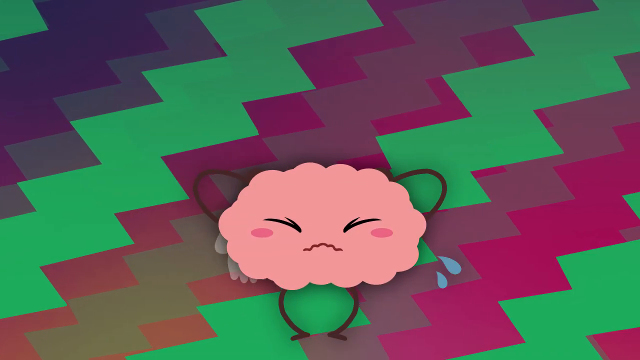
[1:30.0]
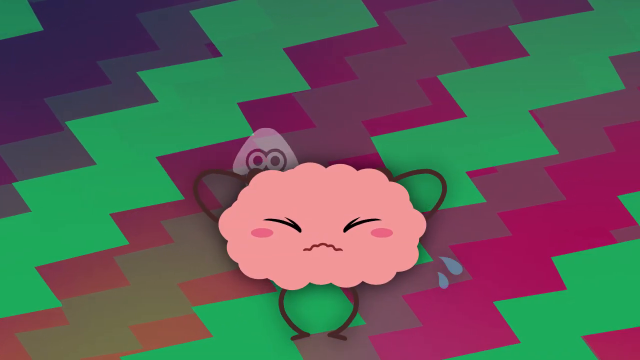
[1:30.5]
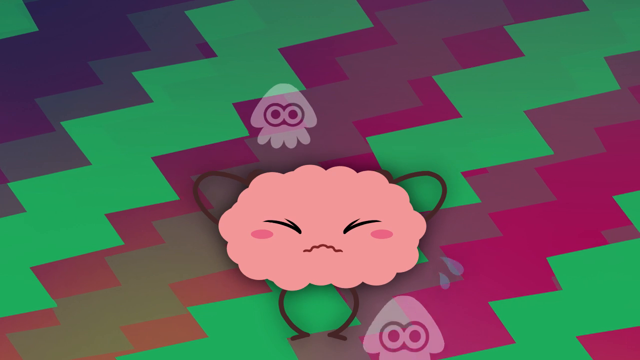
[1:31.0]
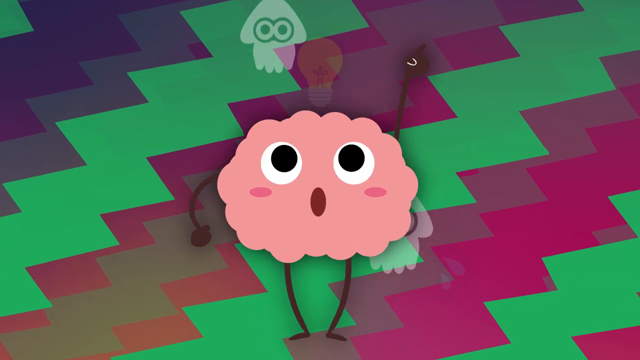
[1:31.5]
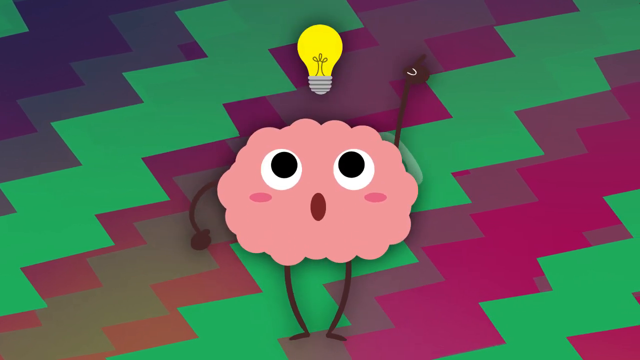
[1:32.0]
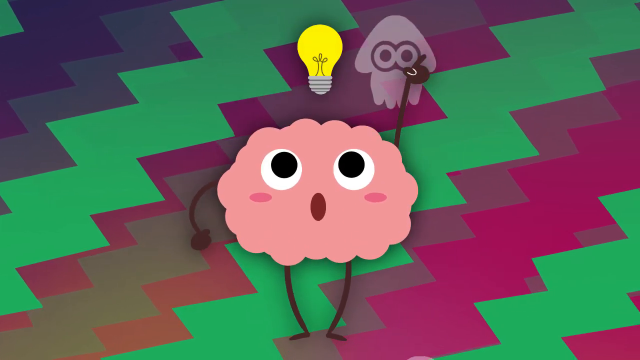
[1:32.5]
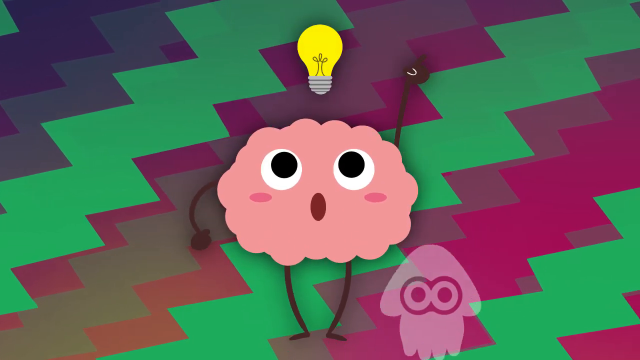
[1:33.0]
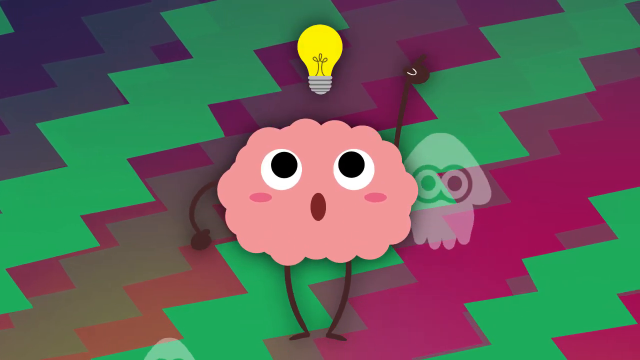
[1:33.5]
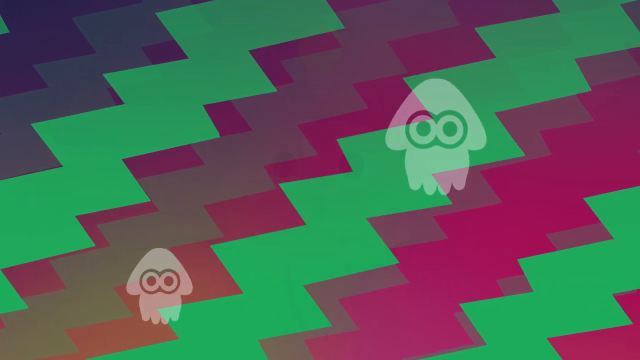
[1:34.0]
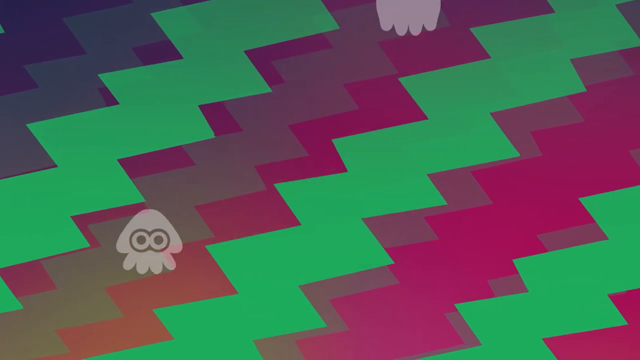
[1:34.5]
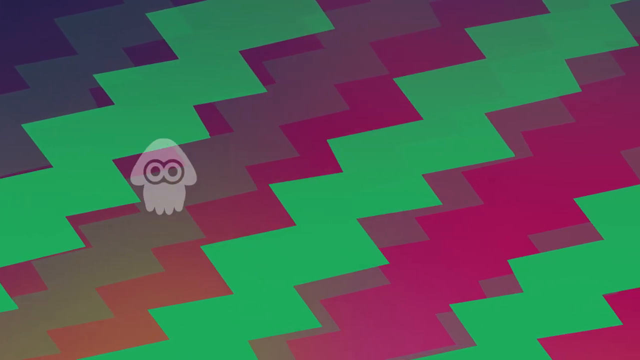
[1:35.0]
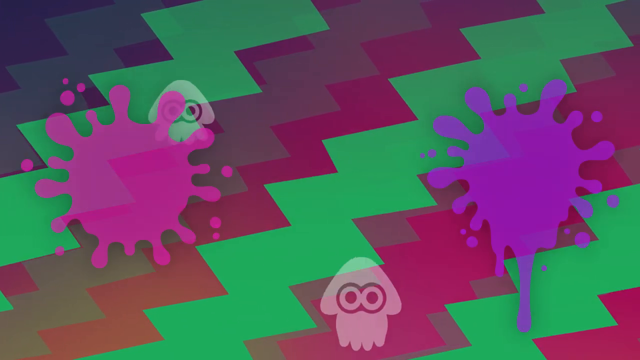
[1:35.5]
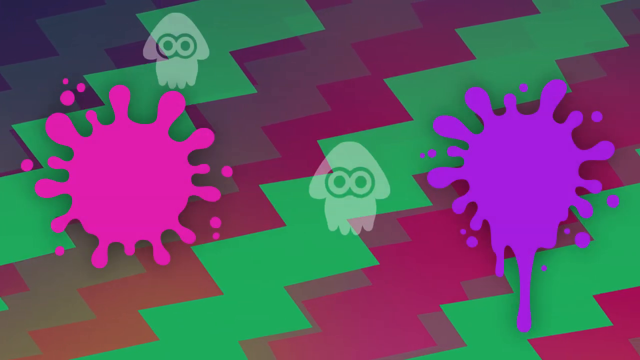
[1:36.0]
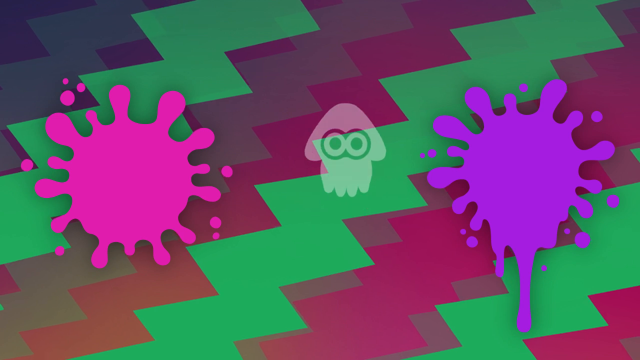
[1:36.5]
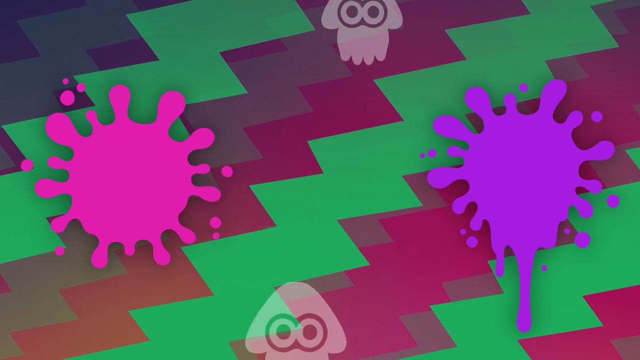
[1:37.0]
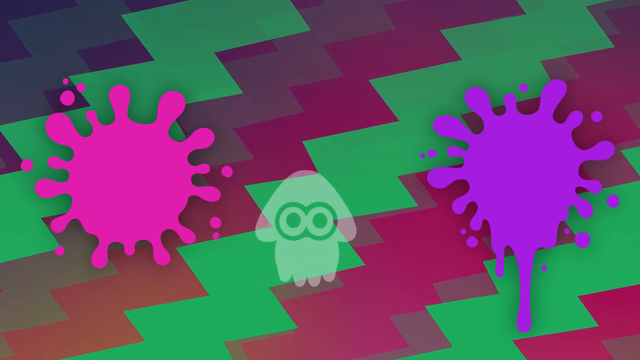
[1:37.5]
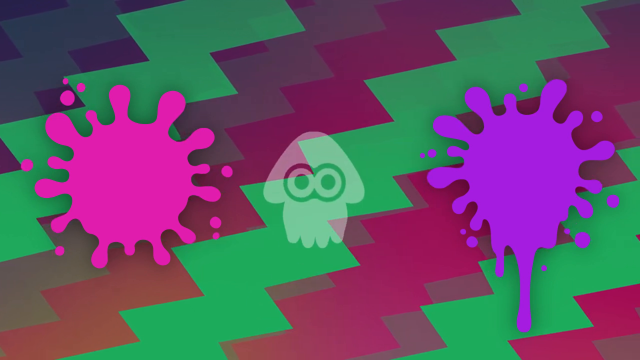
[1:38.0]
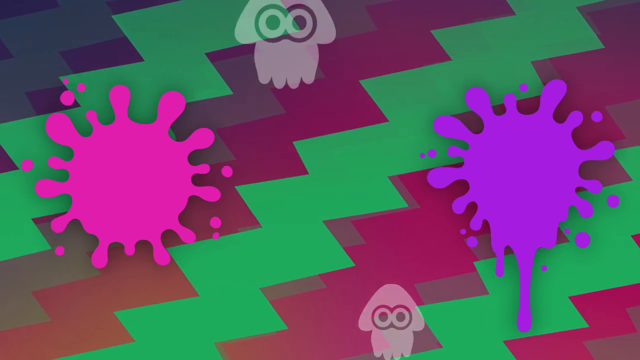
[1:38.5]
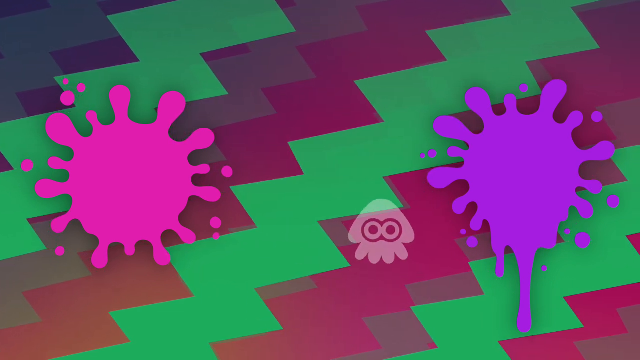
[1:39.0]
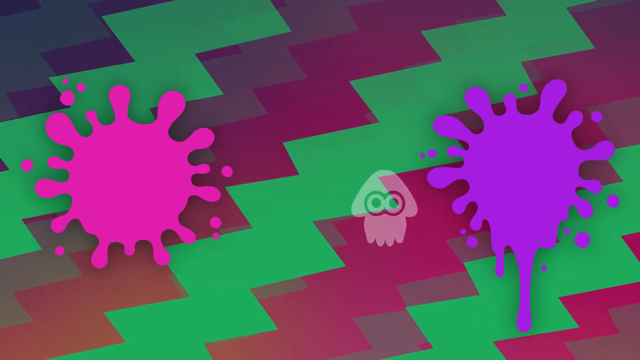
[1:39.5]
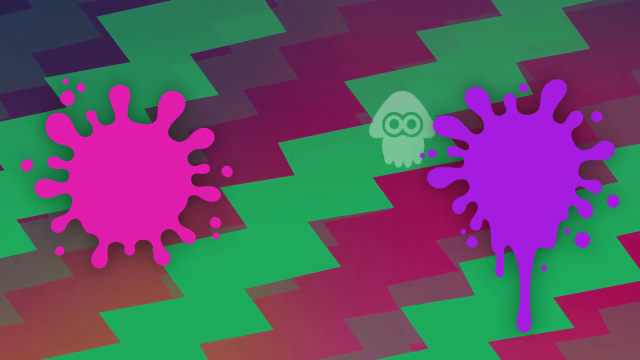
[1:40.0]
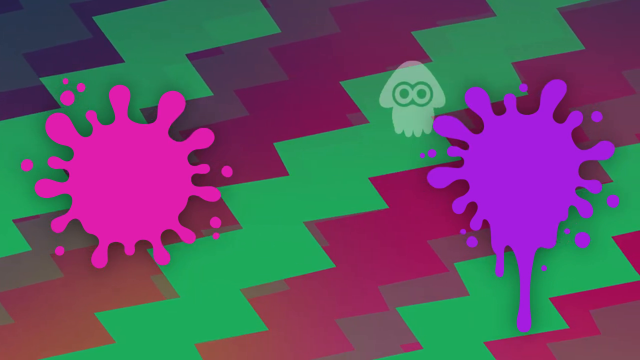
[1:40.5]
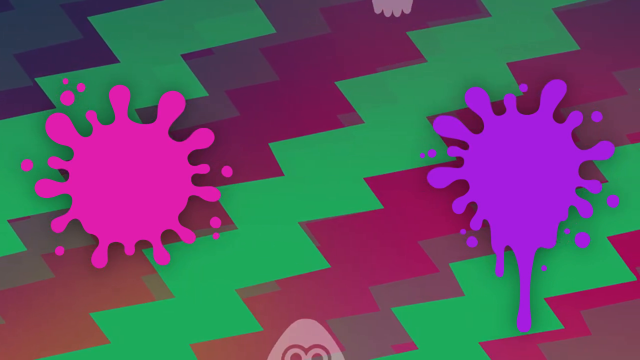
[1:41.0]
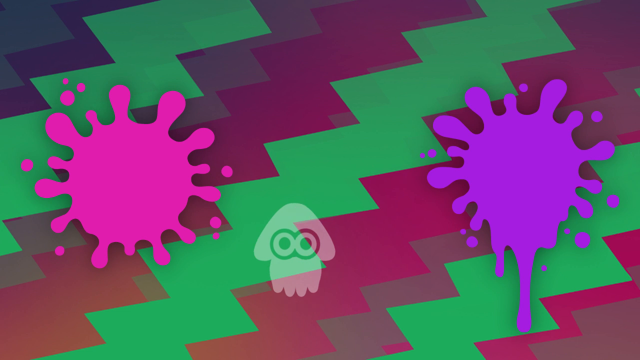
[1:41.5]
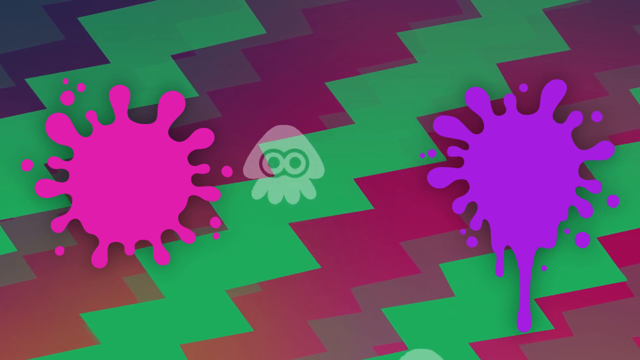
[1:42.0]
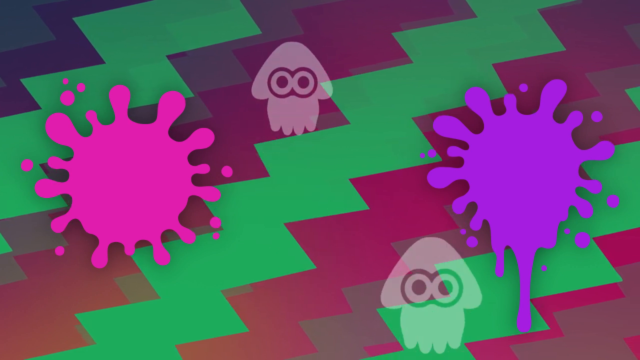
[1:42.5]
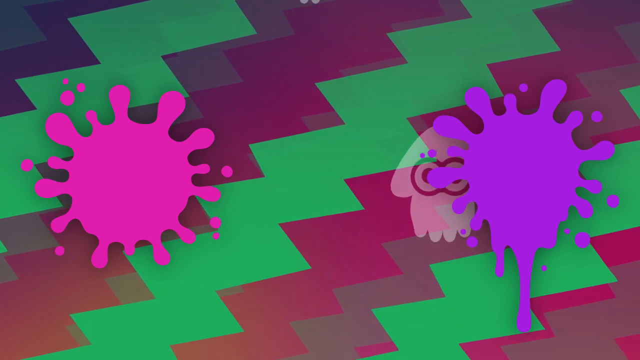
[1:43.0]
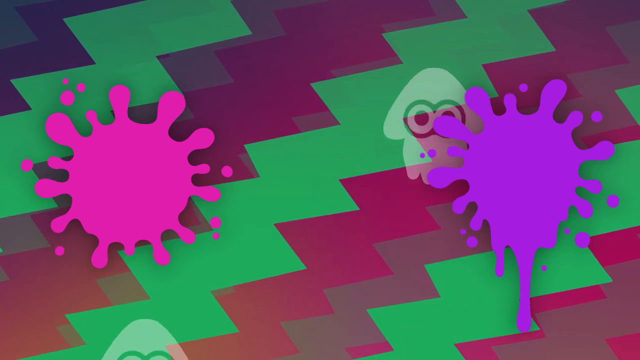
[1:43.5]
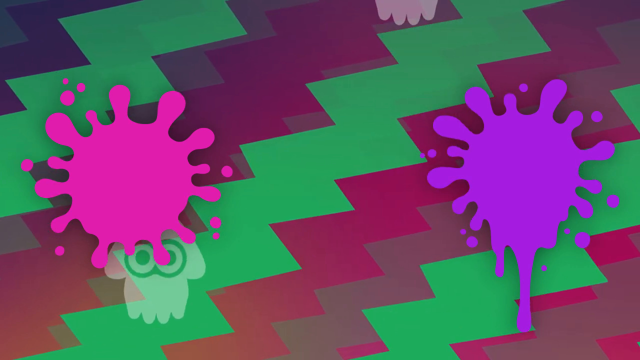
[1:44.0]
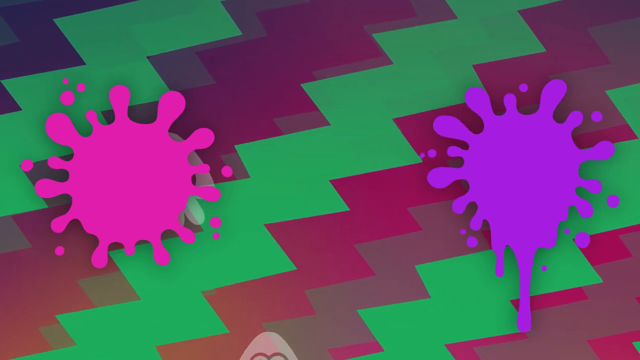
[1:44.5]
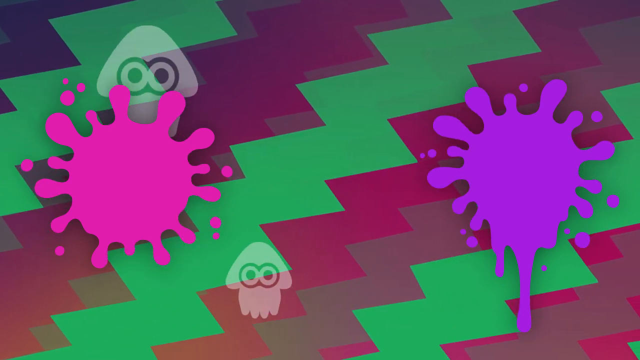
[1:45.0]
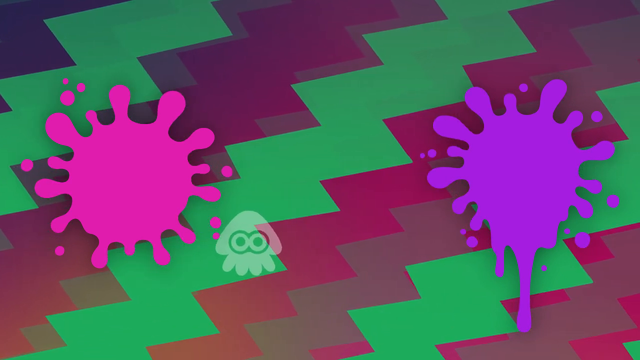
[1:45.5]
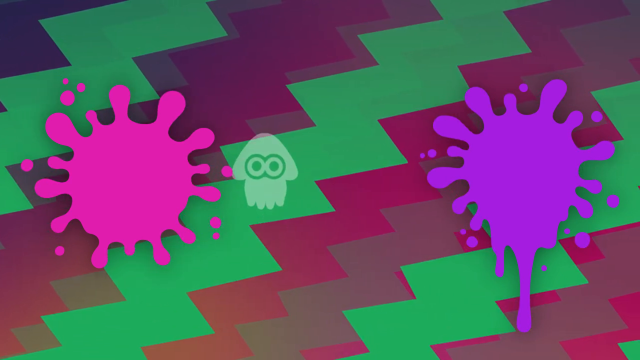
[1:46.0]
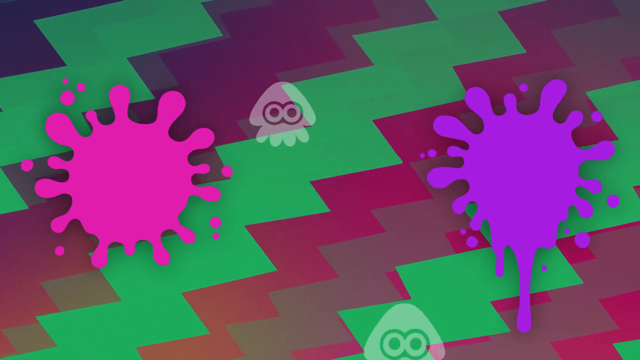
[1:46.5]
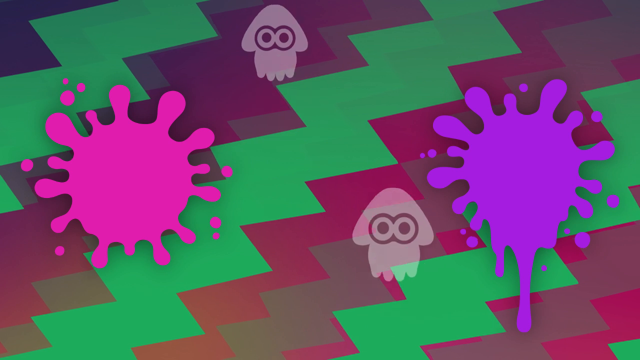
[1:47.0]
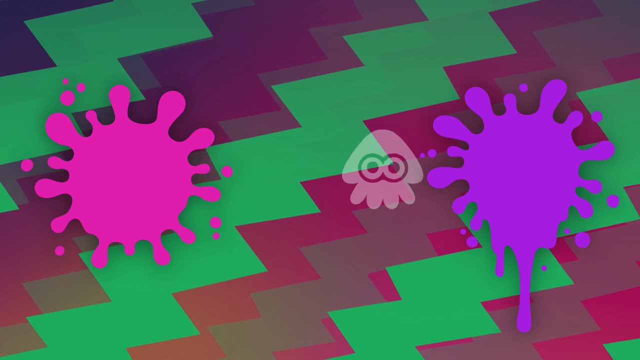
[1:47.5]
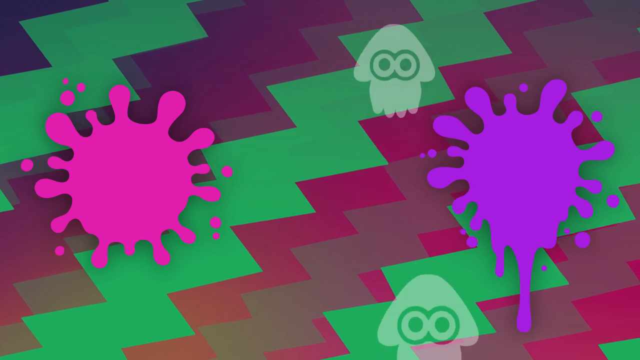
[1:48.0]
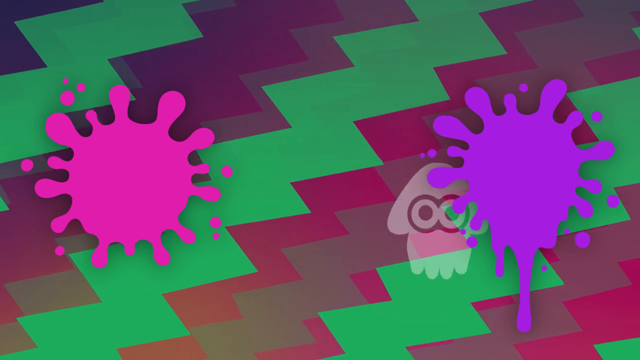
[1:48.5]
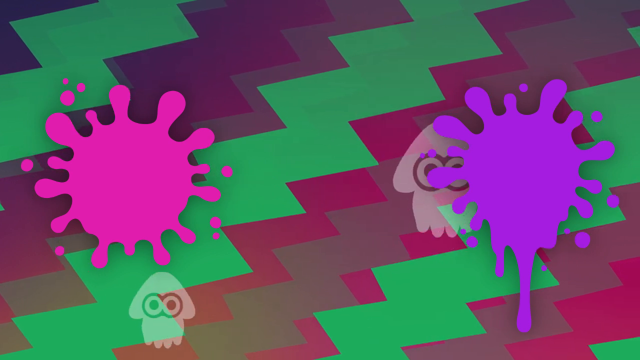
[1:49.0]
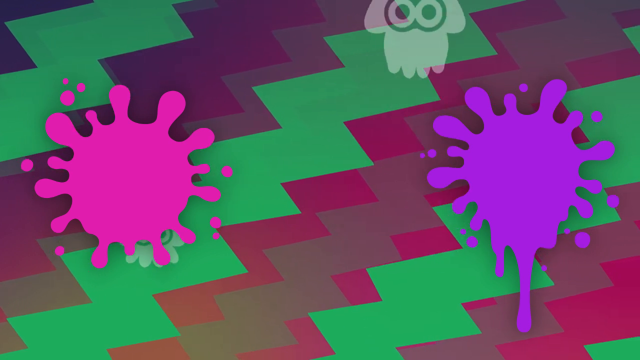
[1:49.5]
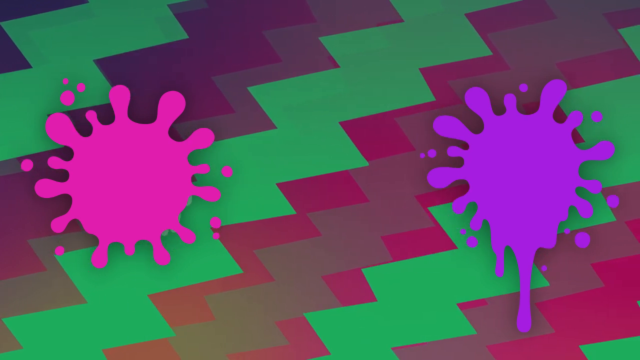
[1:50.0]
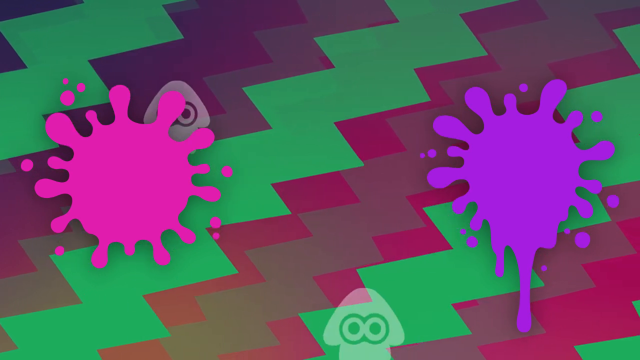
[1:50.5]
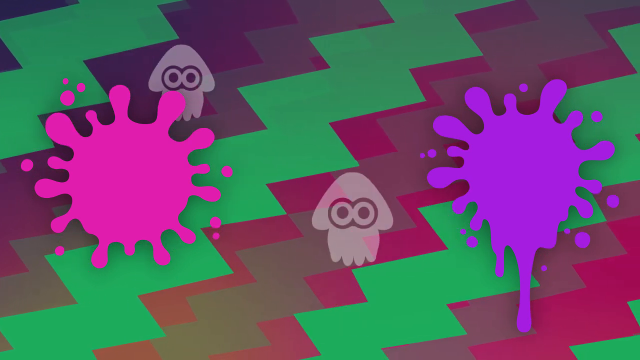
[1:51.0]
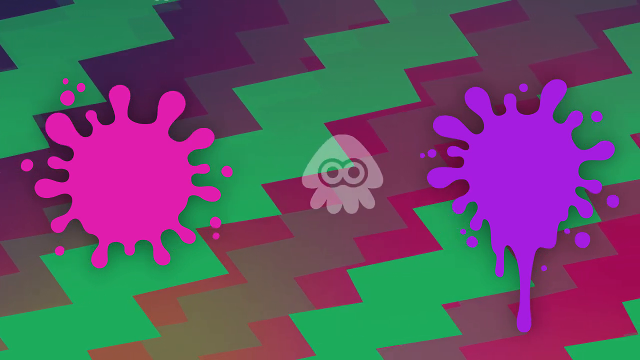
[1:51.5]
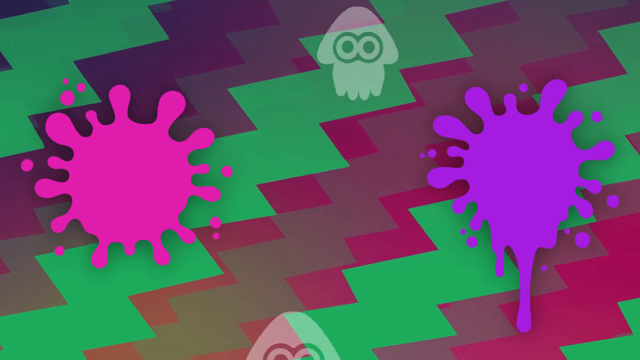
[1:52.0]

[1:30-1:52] The final part shows a lot of blocks and colors, and maybe some features; colorful things move from the bottom upward.